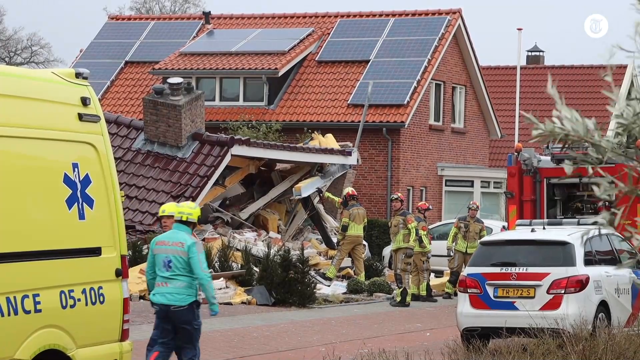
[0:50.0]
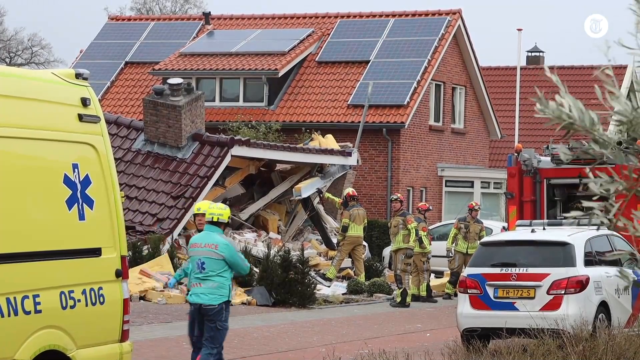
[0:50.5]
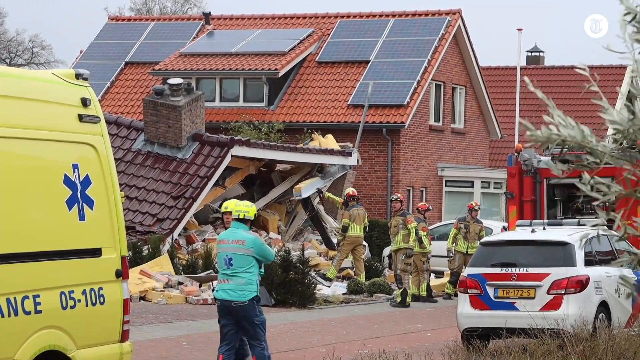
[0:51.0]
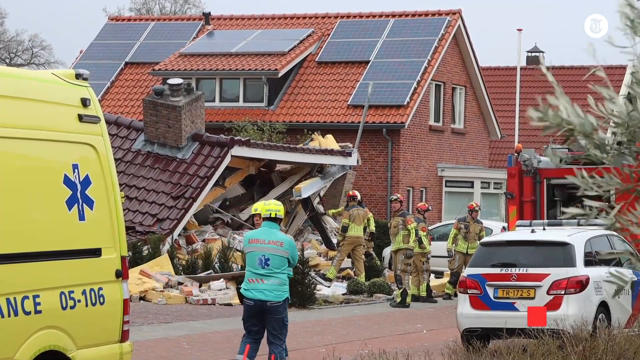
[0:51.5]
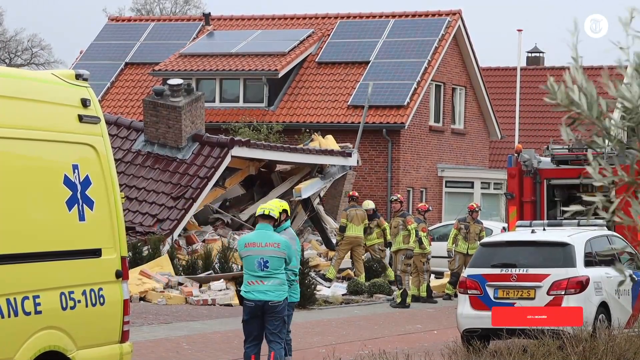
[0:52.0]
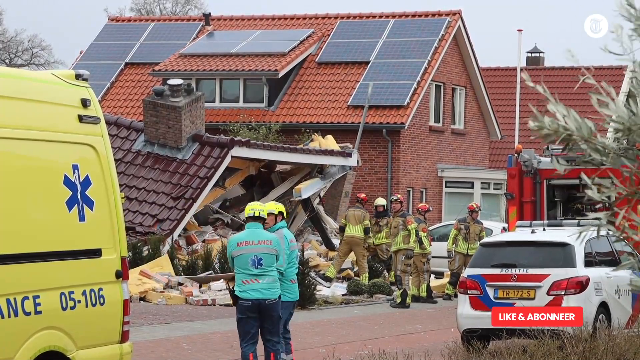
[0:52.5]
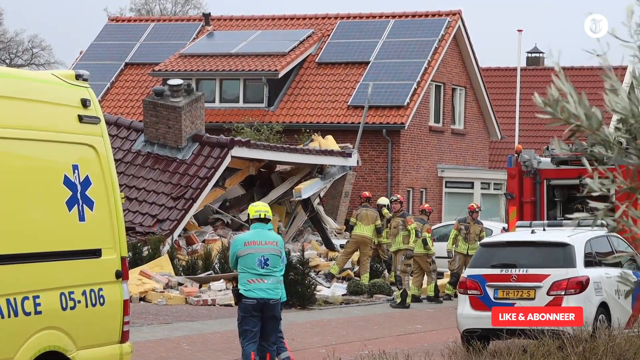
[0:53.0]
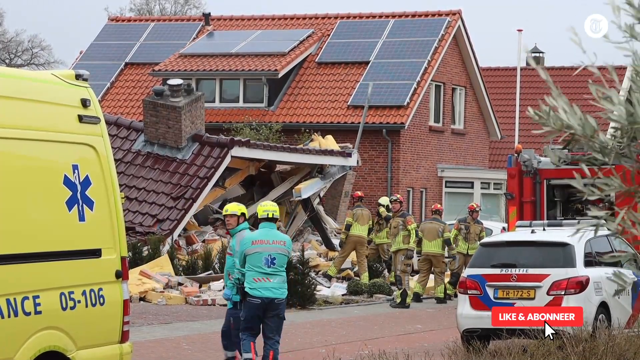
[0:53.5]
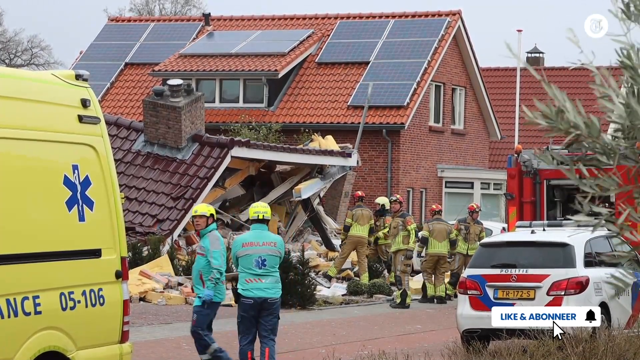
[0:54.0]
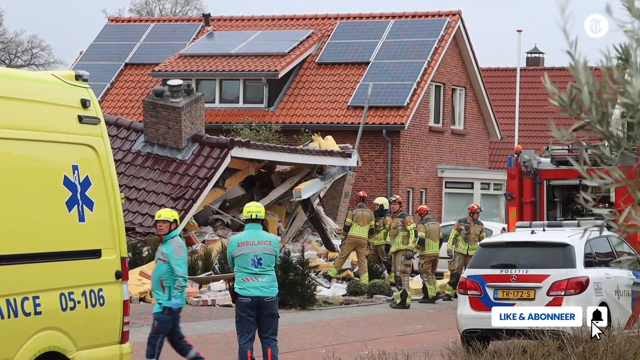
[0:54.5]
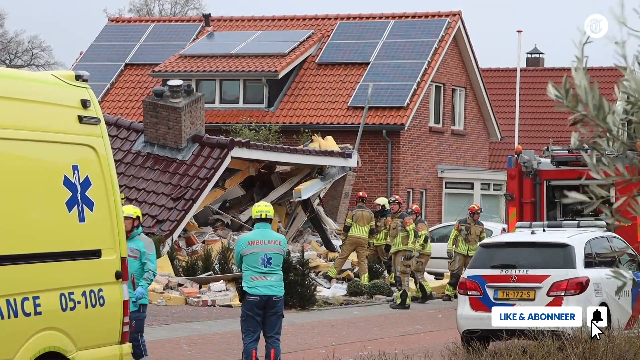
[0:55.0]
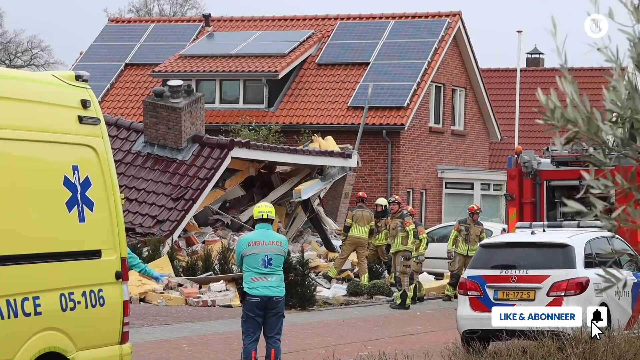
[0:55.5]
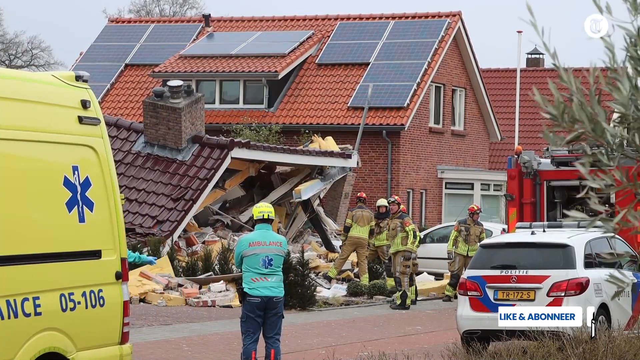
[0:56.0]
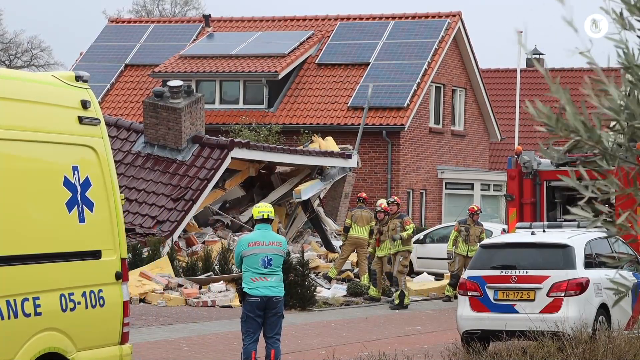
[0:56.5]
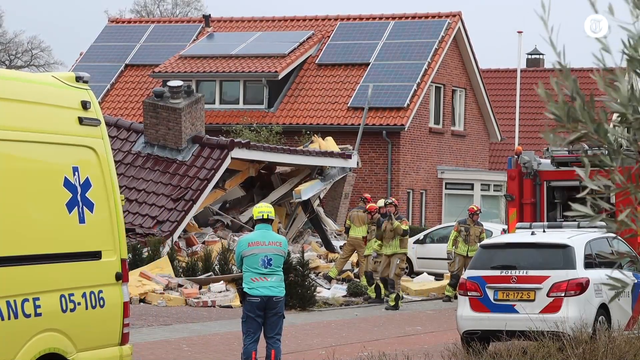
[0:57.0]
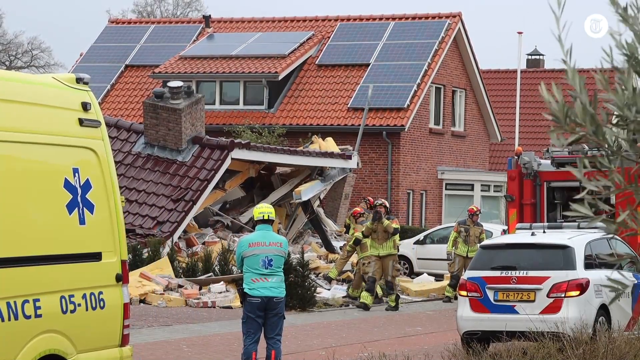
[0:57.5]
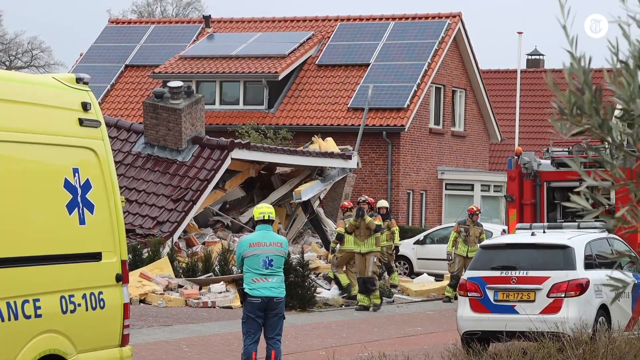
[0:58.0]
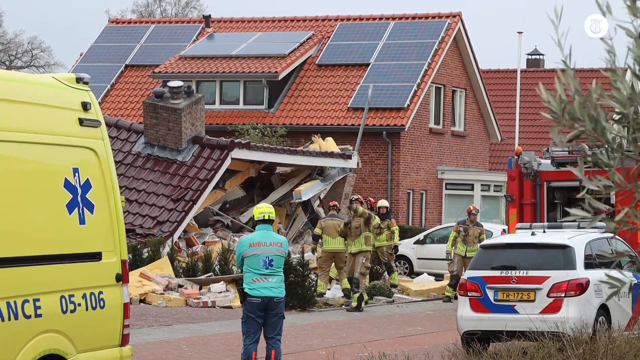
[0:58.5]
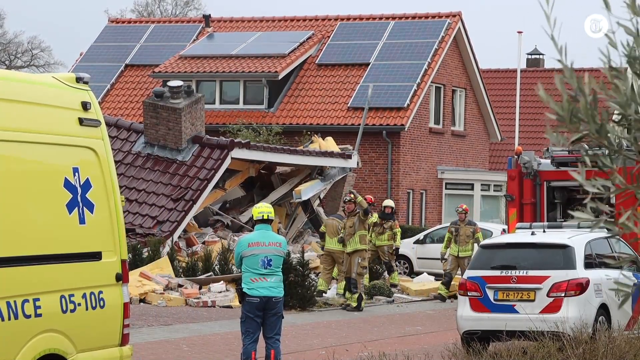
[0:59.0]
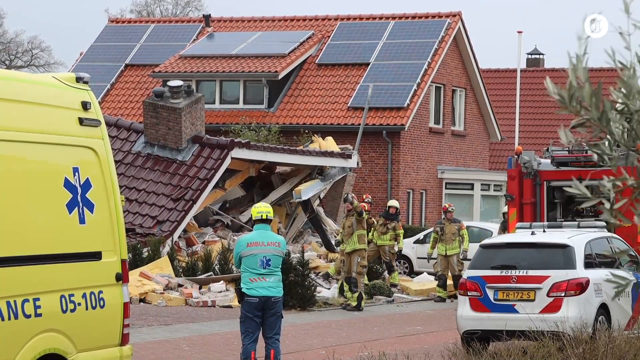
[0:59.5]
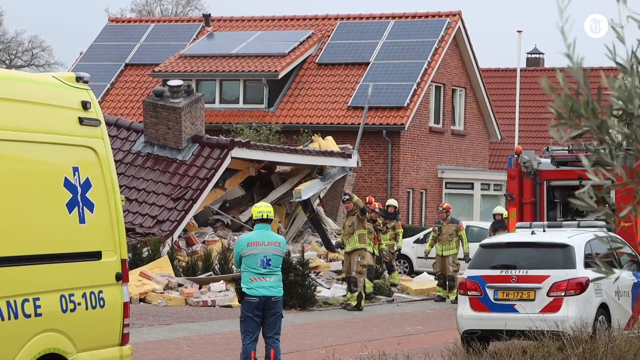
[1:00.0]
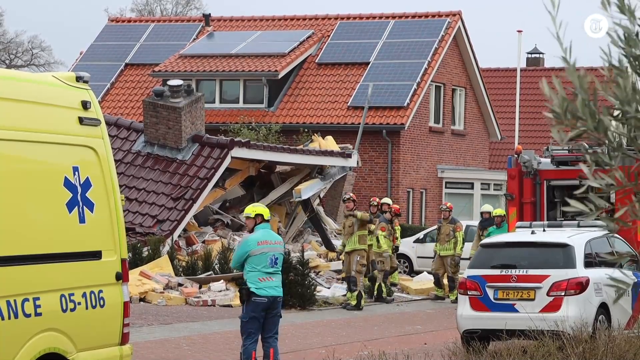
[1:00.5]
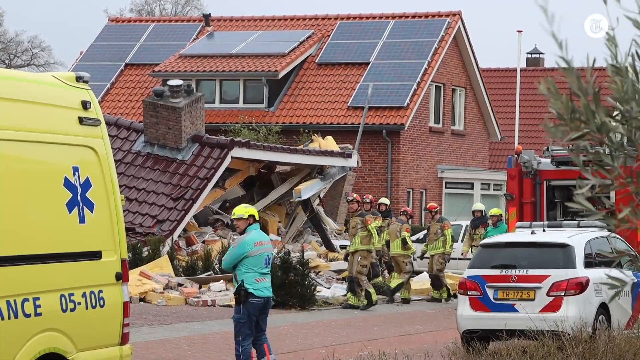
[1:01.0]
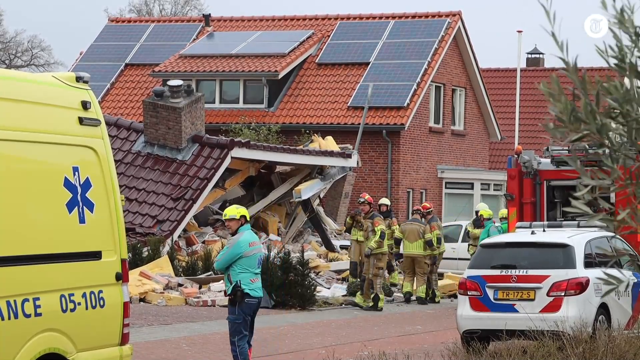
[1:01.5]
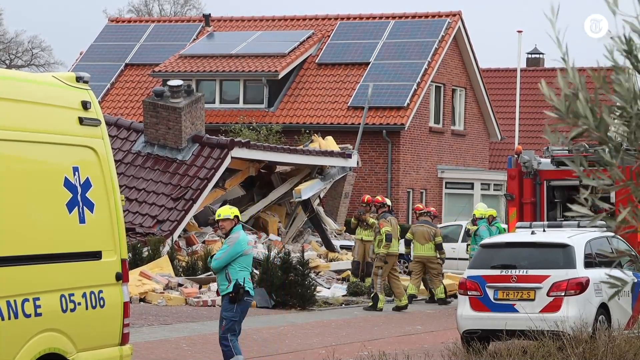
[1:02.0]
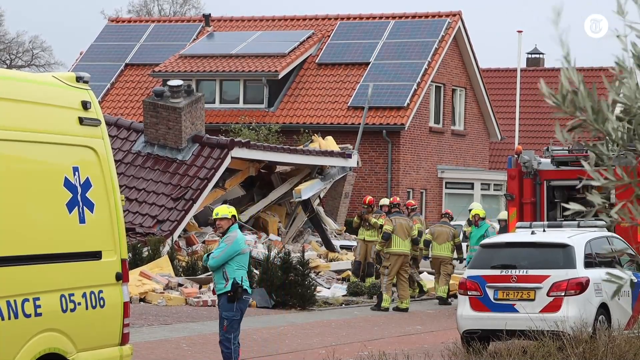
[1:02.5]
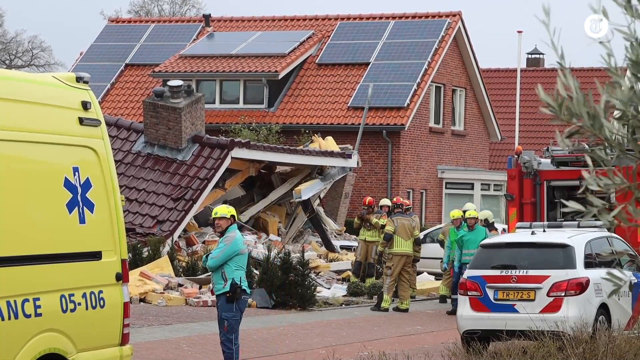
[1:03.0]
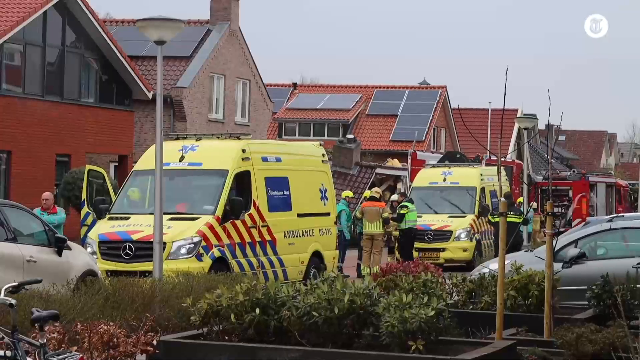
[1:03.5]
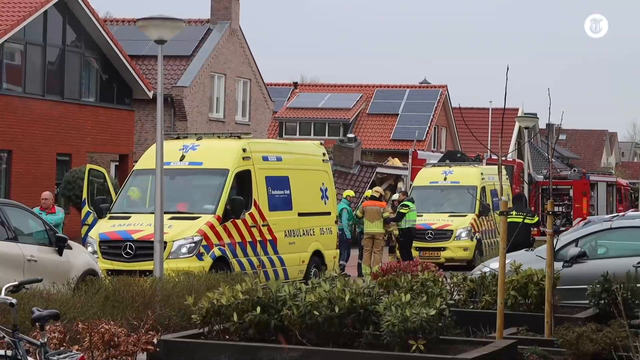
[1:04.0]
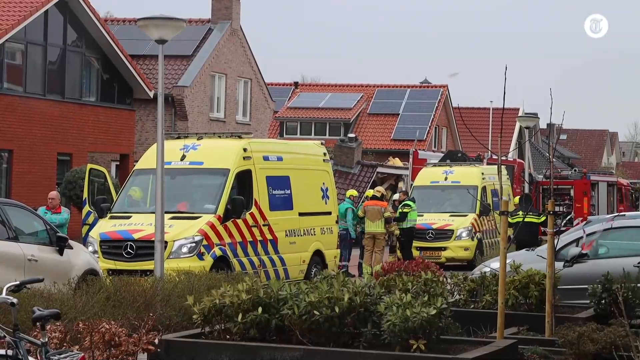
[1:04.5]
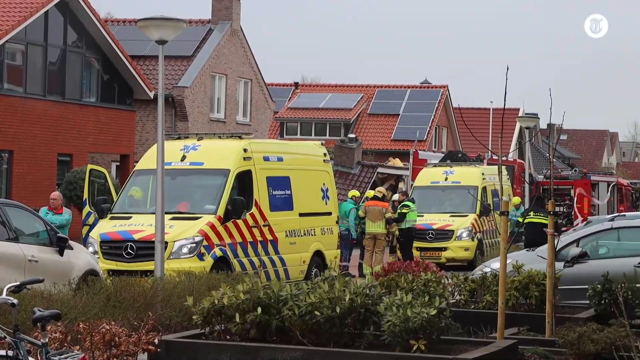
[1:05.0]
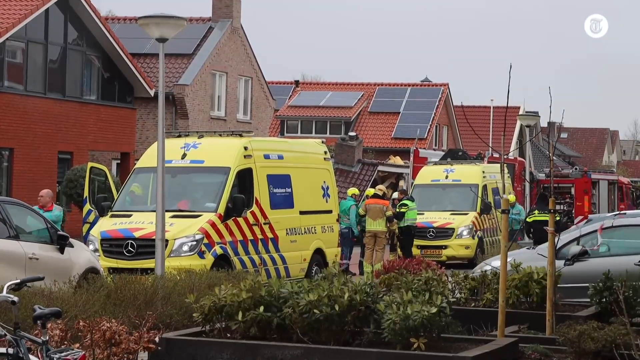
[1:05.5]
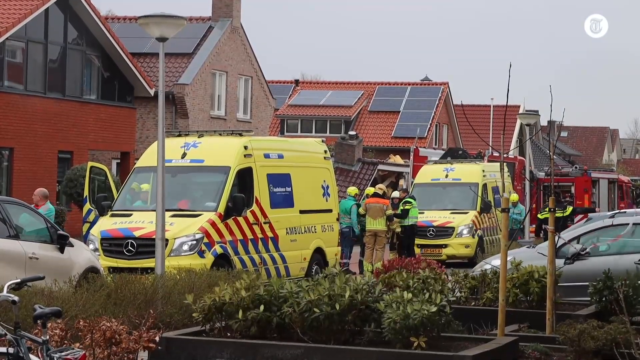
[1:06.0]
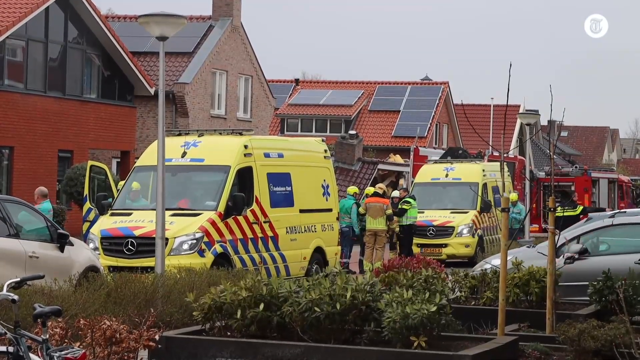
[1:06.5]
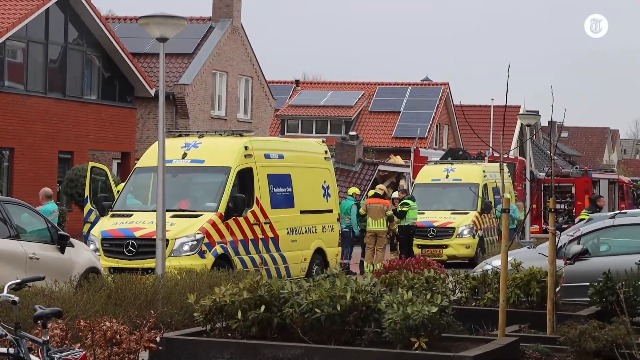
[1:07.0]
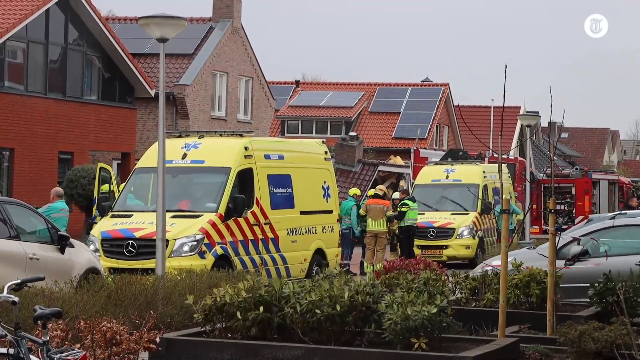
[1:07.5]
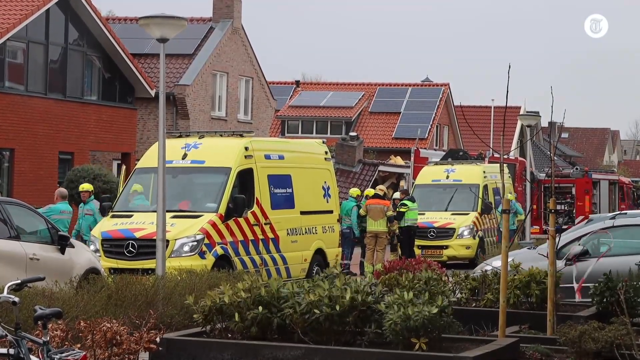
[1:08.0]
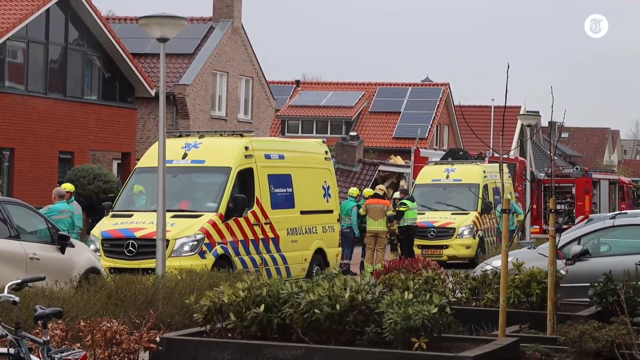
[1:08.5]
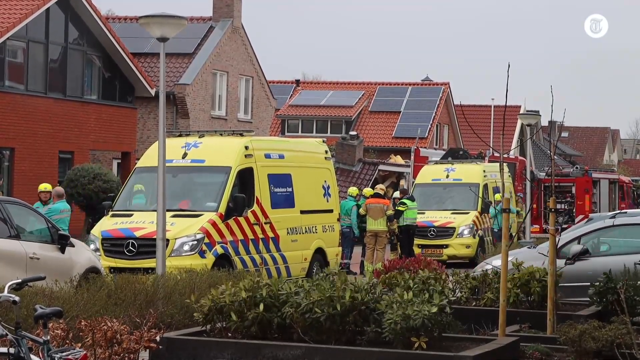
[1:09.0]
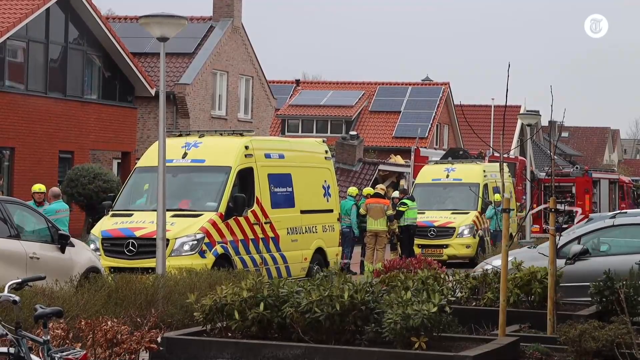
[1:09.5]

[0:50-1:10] A few firemen clear debris from the broken-down house. A few paramedic workers with an ambulance are standing nearby, and there is also a police car nearby. There seems to be a little discussion between the firemen, the paramedics and some other people down the street, and a fireman is kind of motioning backwards with his hand. A group of a few firemen, paramedics and what looks like a police officer are kind of huddled up between the yellow ambulances, having some type of deep discussion. The police officer looks like he is kind of leading the conversation, using his arms as he speaks.